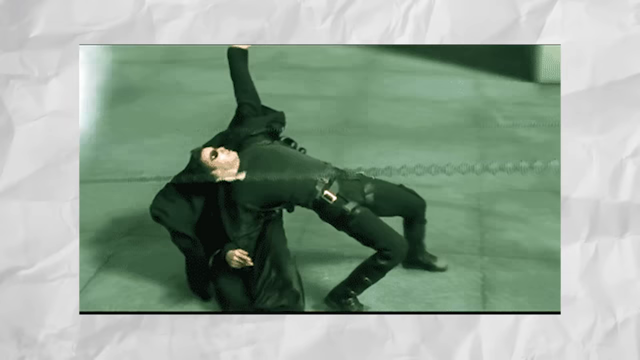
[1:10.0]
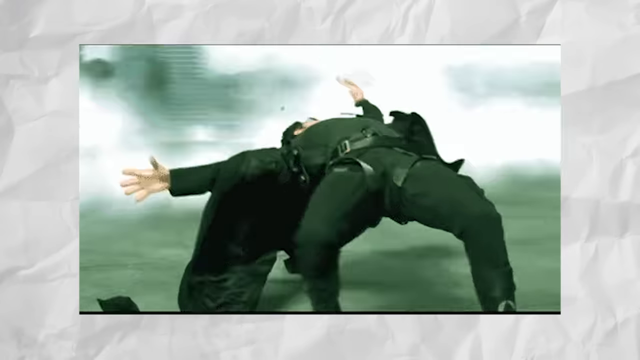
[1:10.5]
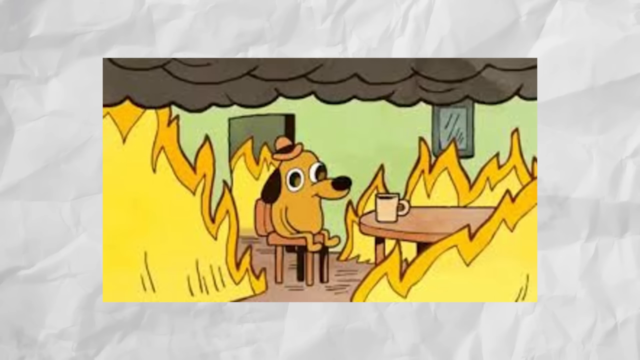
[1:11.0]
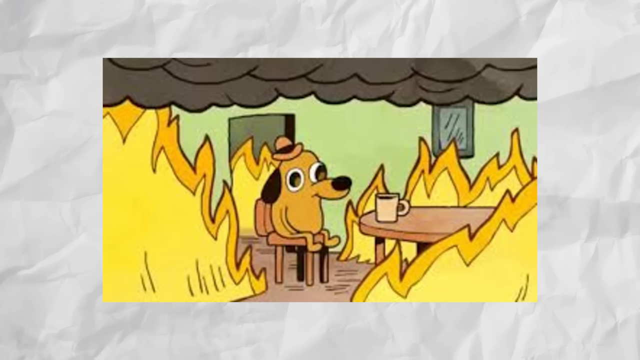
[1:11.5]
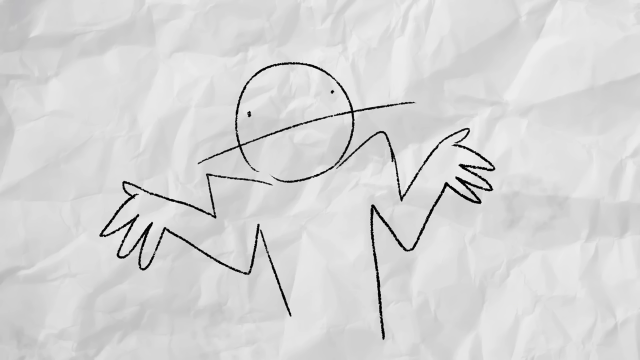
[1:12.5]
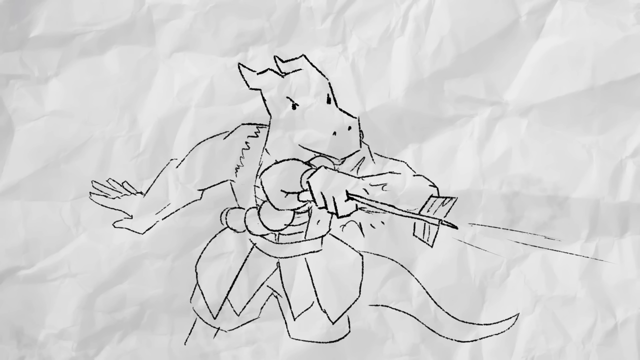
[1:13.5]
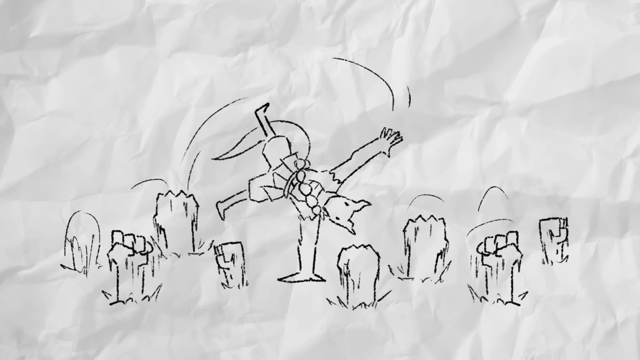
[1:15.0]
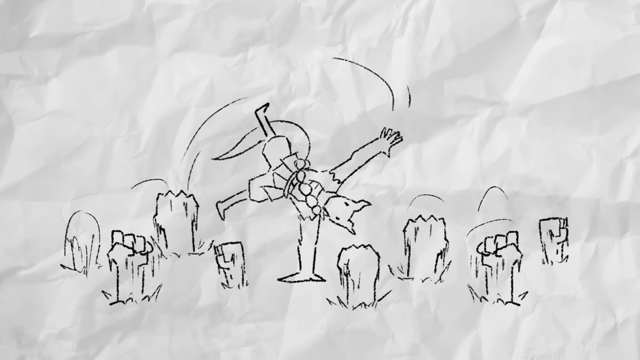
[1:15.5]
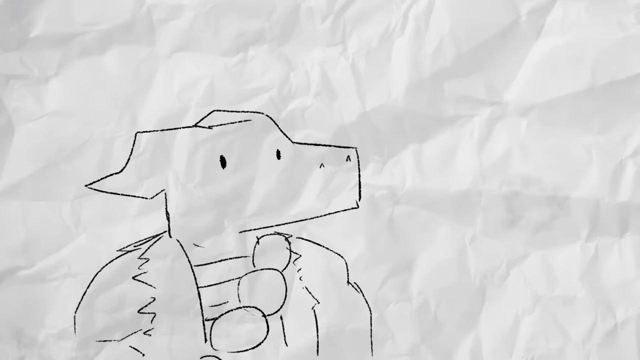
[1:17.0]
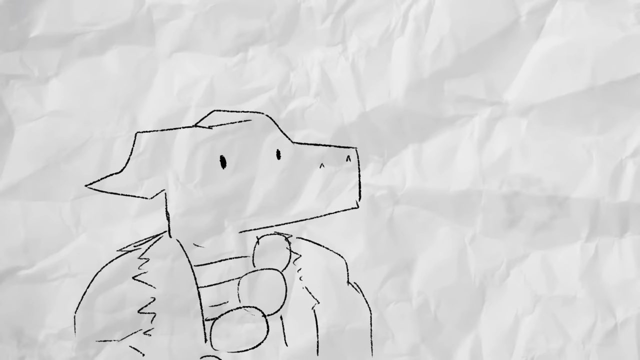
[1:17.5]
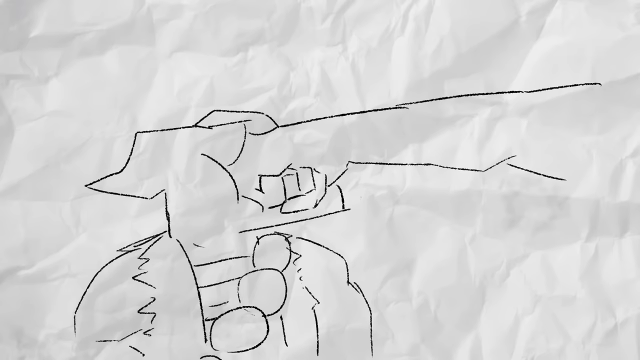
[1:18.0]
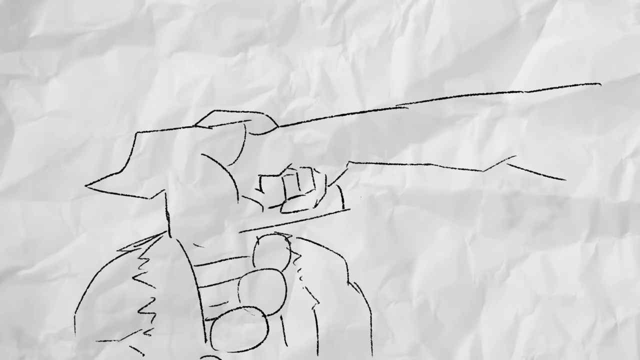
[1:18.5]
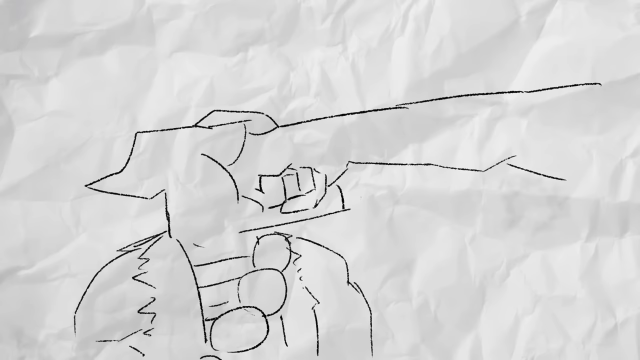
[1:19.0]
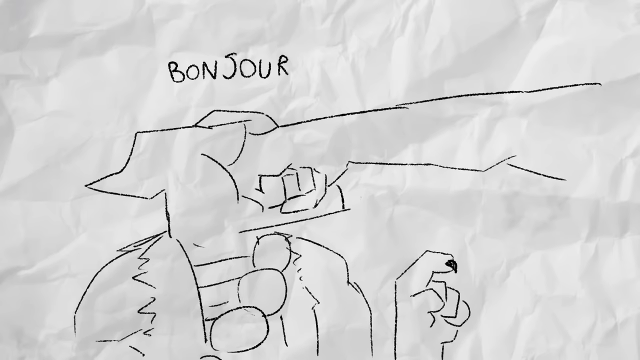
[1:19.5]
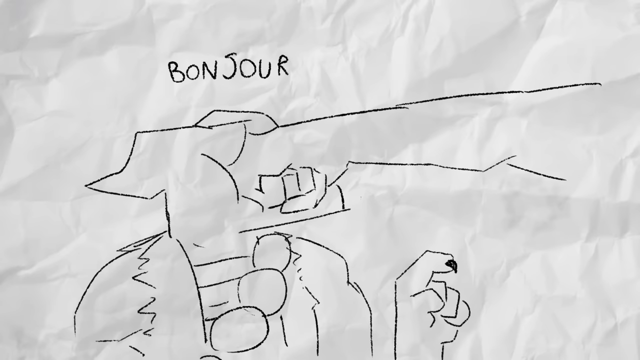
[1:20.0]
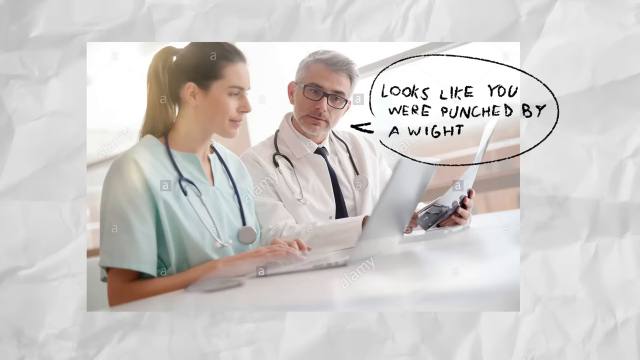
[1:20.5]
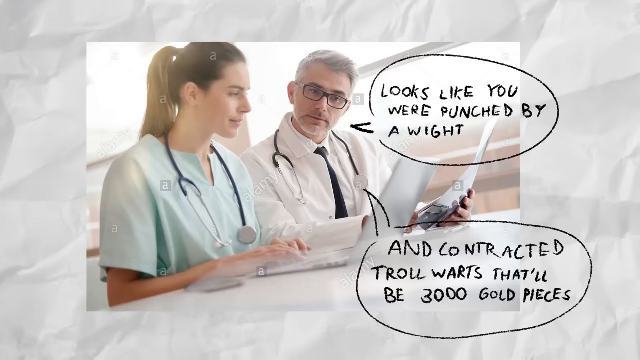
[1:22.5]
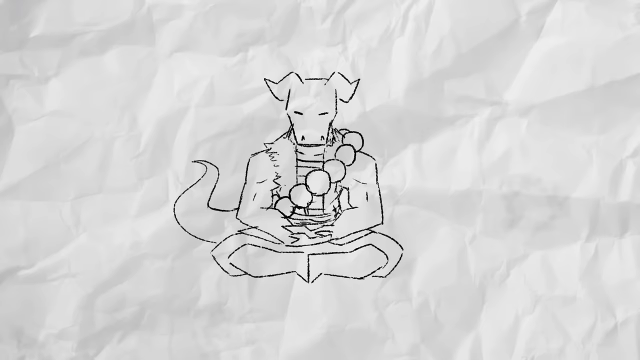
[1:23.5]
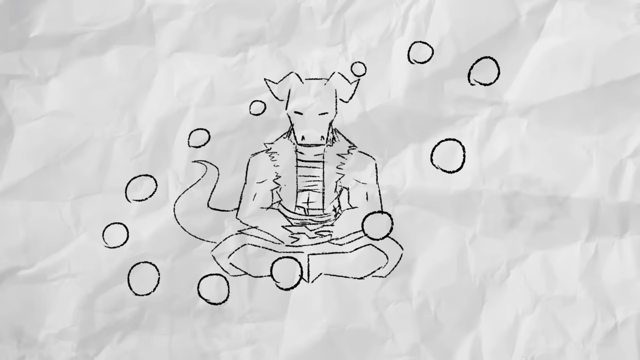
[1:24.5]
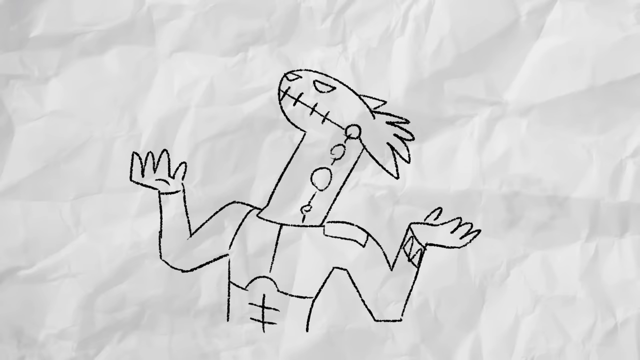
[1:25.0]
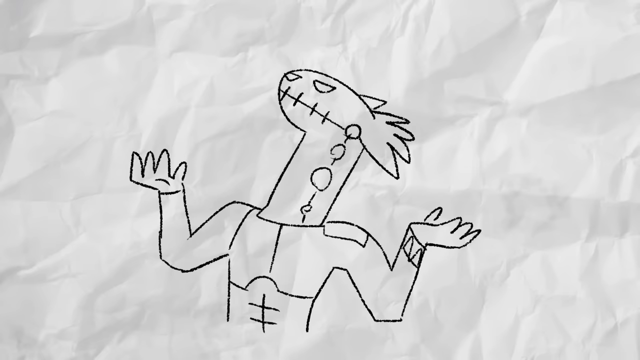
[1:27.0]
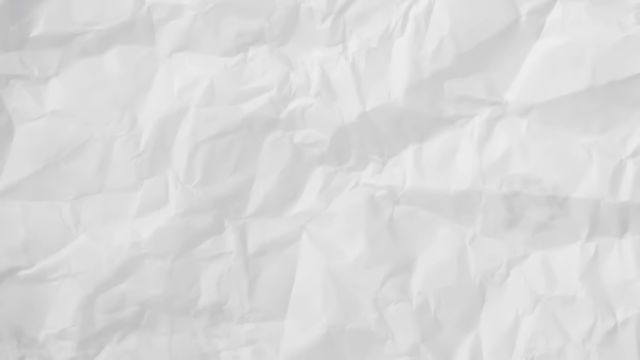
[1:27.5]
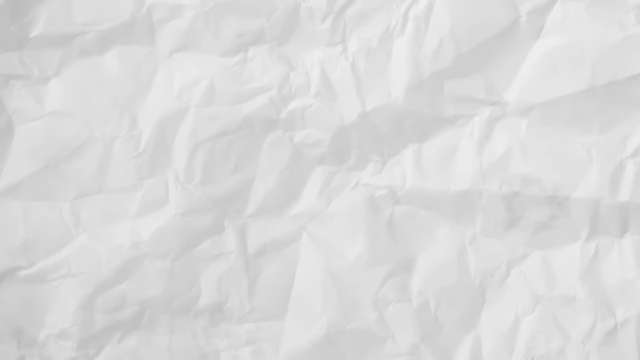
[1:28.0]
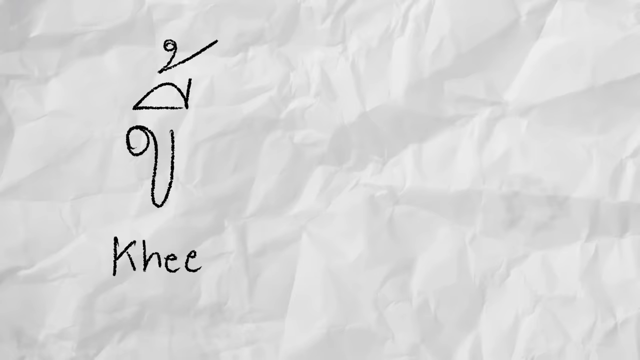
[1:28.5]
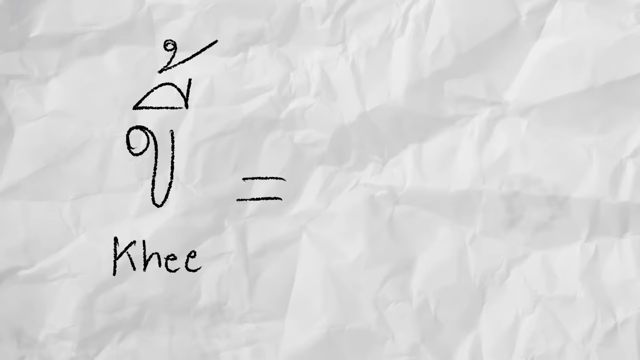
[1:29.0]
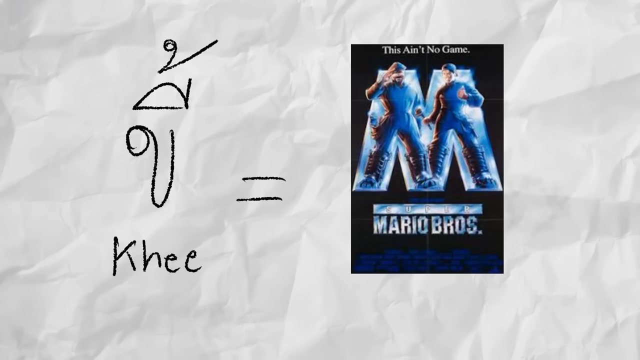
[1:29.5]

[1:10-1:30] Neo dodges bullets, bent backwards at the knees as in the movie, the top of his head toward the left, a long trench coat hanging down behind him, all in black, with his feet pointing to the right. Around the outer edge is a border of the white crinkled-paper background. The video cuts to the meme of the dog in the burning building, then to a drawing of the man kind of shrugging his shoulders with his hands out. The dragon lizard is then shown catching an arrow, then doing a handstand with a bunch of hands punching up. A close-up of his face follows as a hand comes from the right side and punches him in the face. Next, two doctors appear, a woman on the left and a man on the right, both in white; she has a blonde pigtail, and he has gray hair and glasses. To their right is a speech bubble that says "Looks like you were punched by a wight," followed by more text. He is then shown in a Zen pose with a little circle surrounding him, and then standing with his hands raised, looking up to the left. Finally, some foreign-language text appears on the left side, followed by an equals sign and the old Mario Brothers movie game.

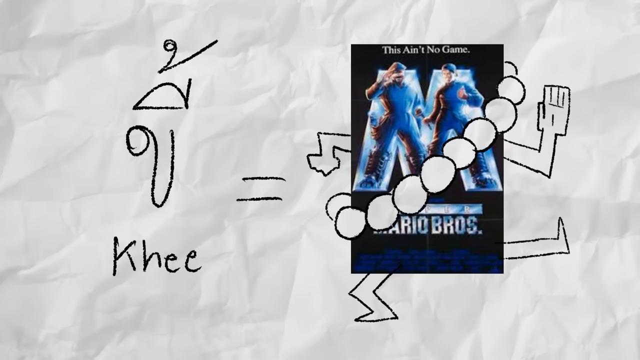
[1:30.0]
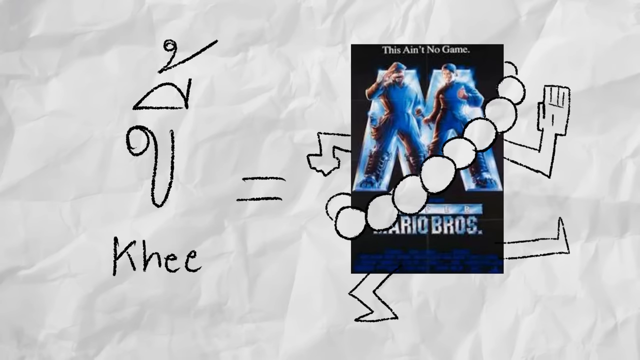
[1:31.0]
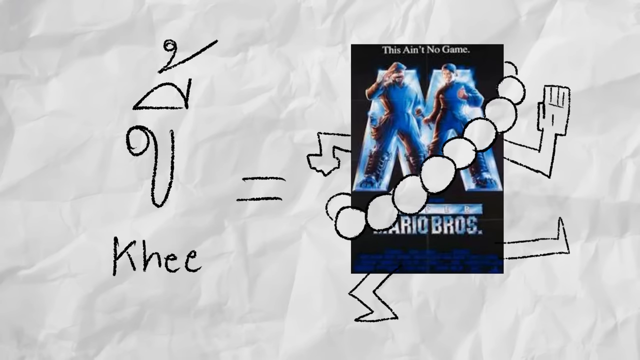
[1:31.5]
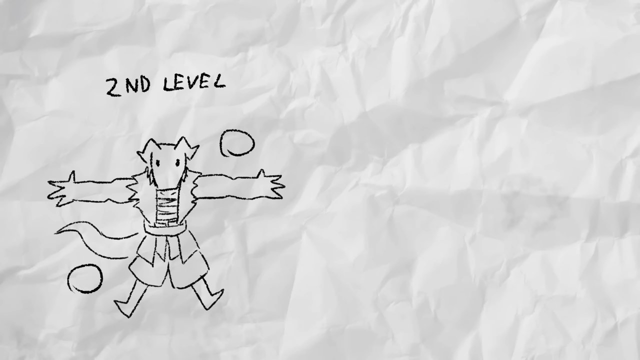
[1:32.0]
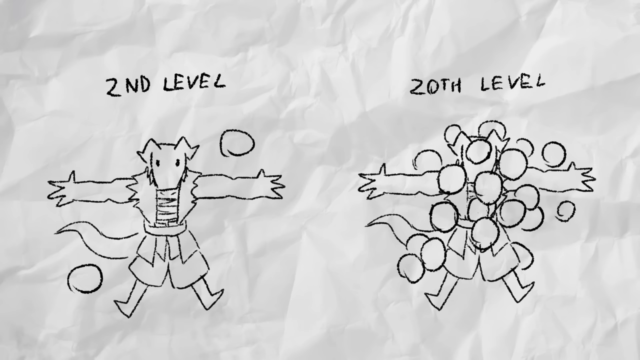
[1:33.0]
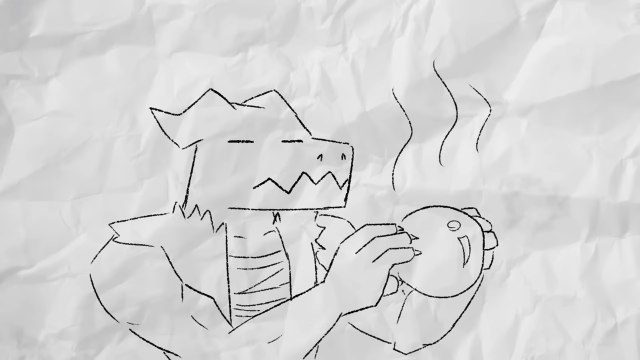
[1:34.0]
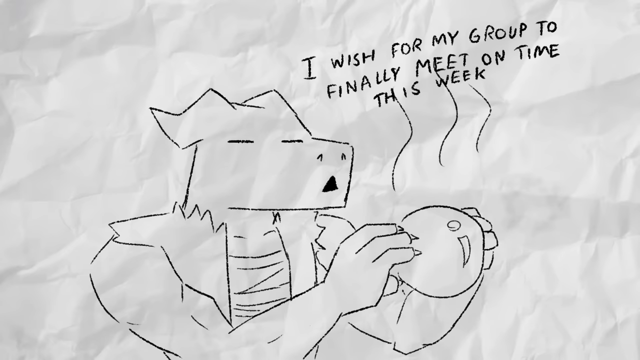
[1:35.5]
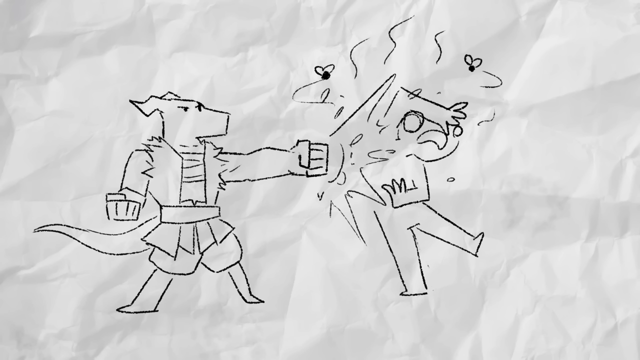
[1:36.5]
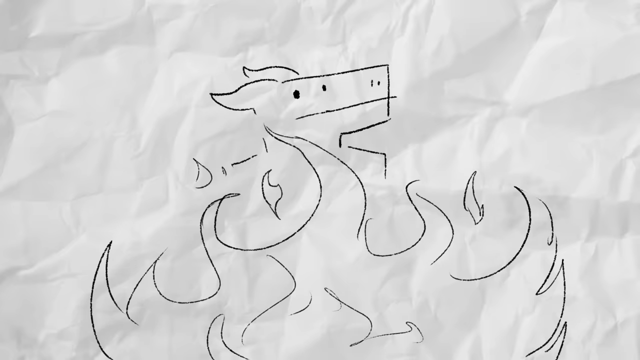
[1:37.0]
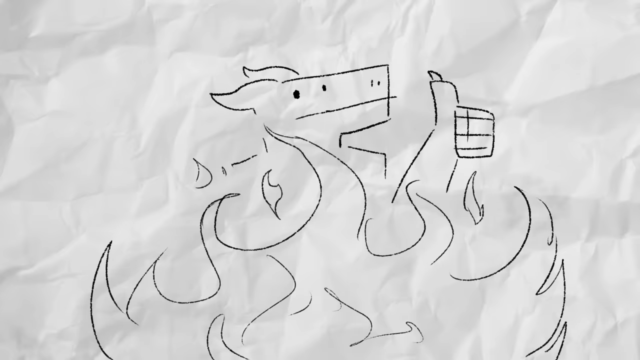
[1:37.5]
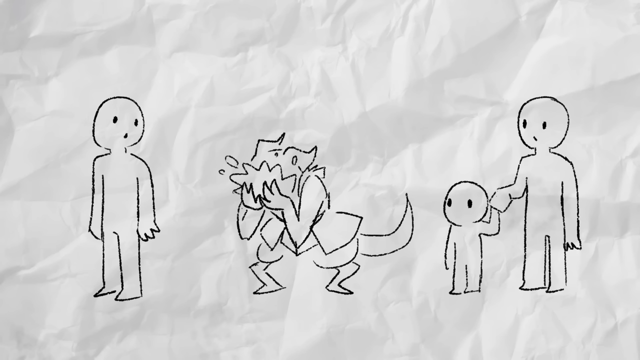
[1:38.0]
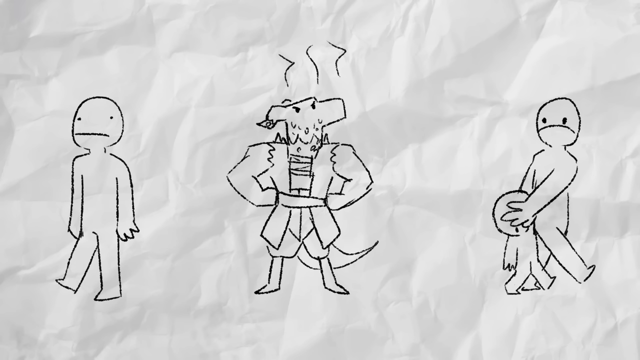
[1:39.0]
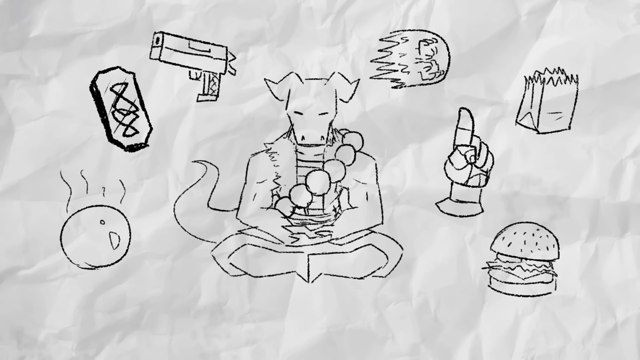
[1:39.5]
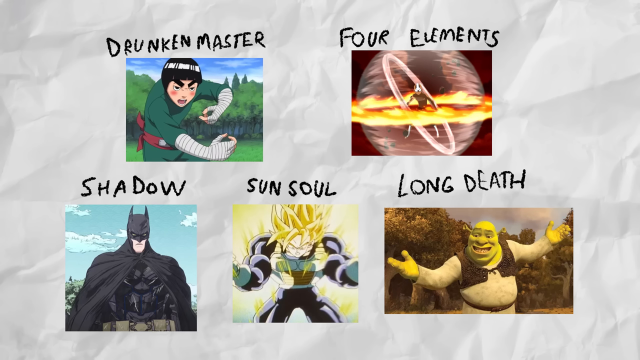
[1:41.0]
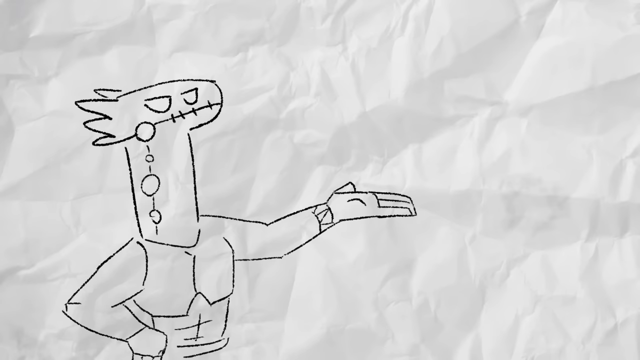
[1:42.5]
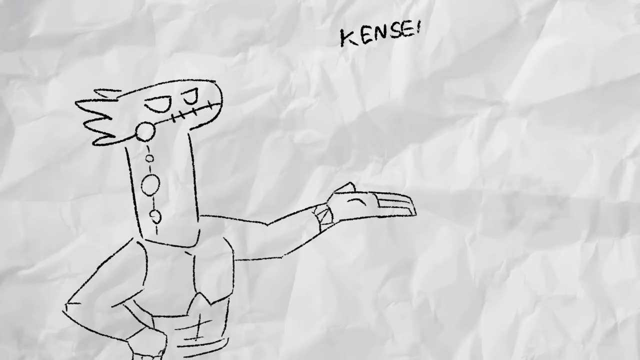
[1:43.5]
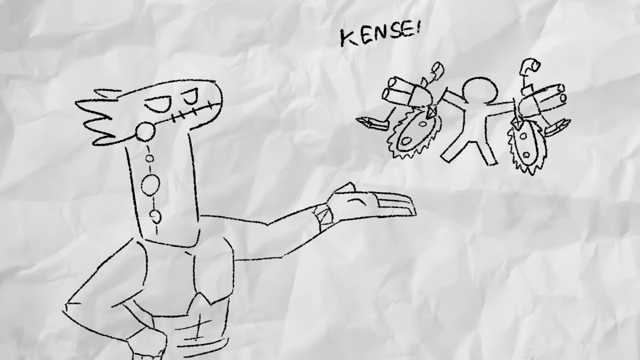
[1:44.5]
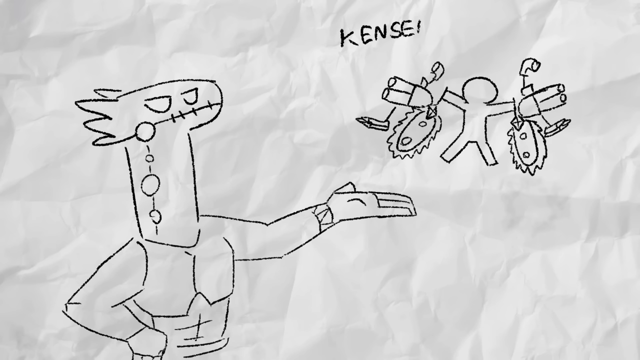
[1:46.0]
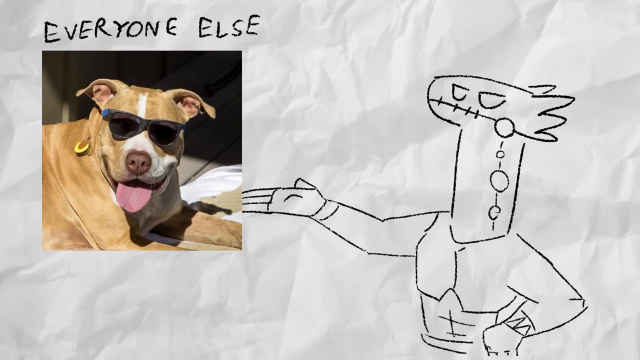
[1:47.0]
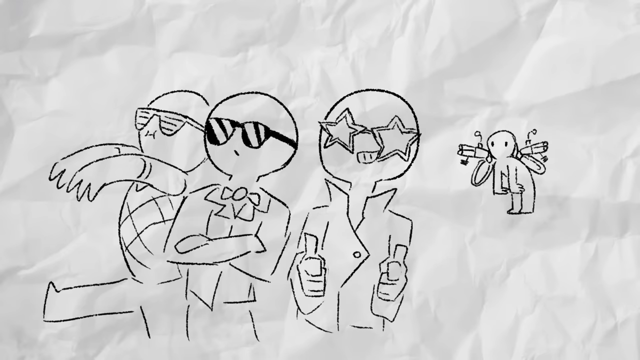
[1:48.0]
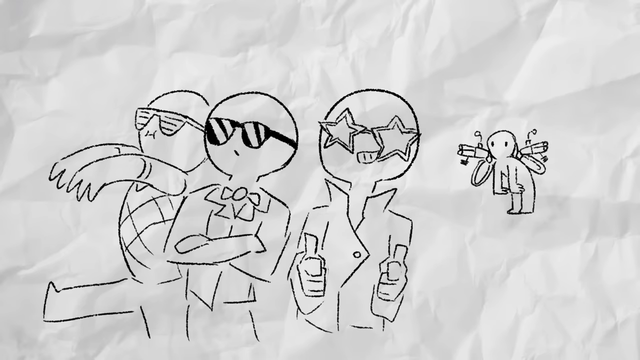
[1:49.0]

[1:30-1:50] The foreign-language text is on the left side, then the equals sign, with the Mario Brothers movie on the right side. It has pearls wrapped around it, coming from the left and going up over the right. Simply drawn arms come from the left and right sides, and there is one leg at the bottom and one kicking out to the right. The dragon guy is then shown on the left side with the text "second level" and two balls, one below him on the left and one up on the right. Then the text says "20th level," and the balls are all over him. A close-up shows him facing to the right, holding one of the balls, as text appears above him. He is then shown in some action with fire around him and a couple of people on and around him: he is in the center, with a person on the left and a person on the right with a small child. Next he is shown in a Zen pose with things going around him: on the left side a ball, above that a little rectangle, a gun going left to right across the top, a fireball, a bag of food, a finger pointing up, and a burger in the bottom right. Some video game characters are then shown. He is shown with his palm out to the right side, then with a palm out to the left side as a picture of a dog appears. More of the drawn creatures follow.